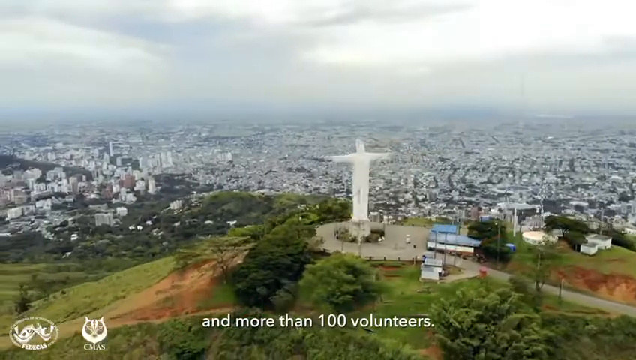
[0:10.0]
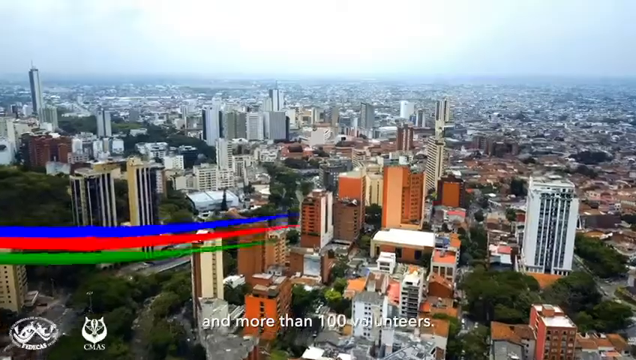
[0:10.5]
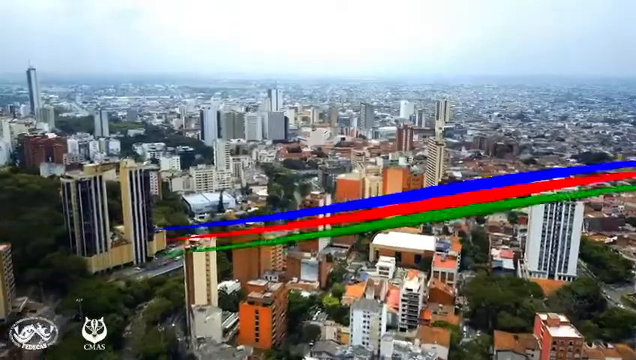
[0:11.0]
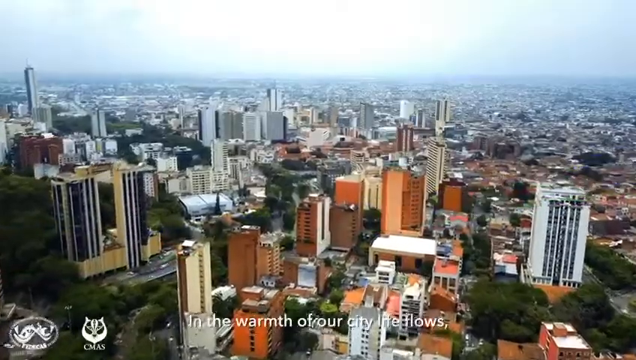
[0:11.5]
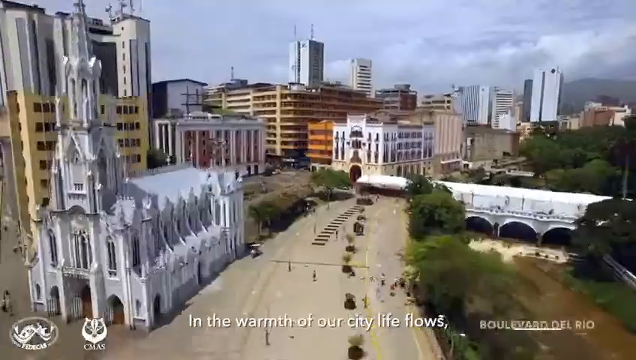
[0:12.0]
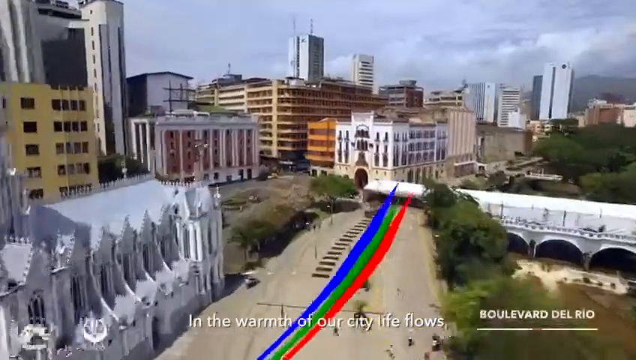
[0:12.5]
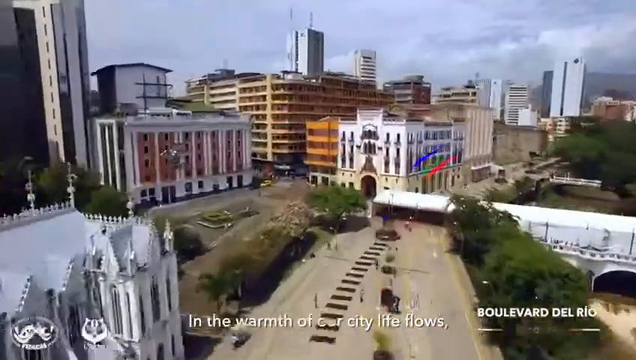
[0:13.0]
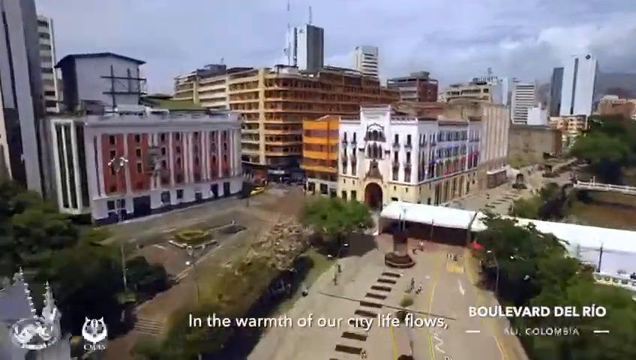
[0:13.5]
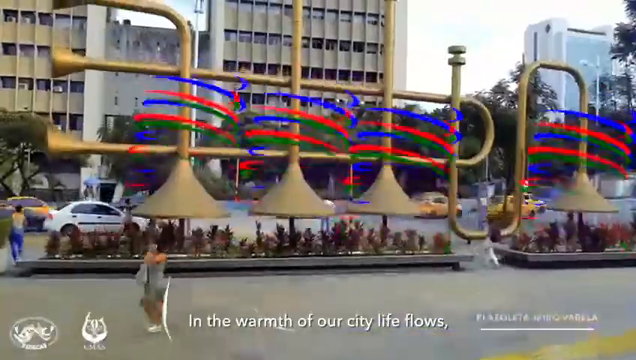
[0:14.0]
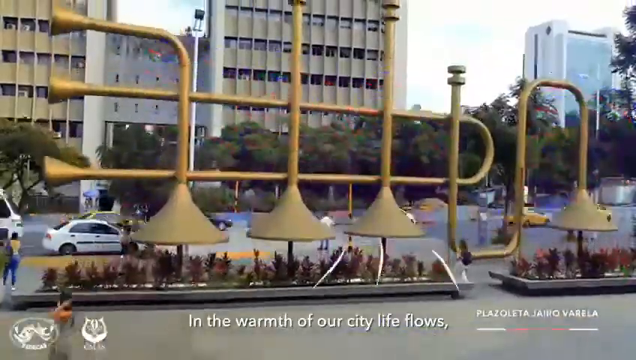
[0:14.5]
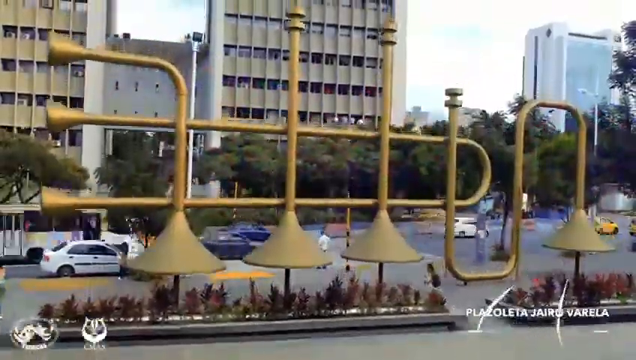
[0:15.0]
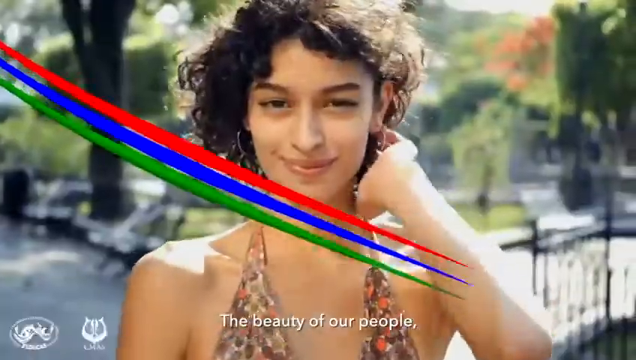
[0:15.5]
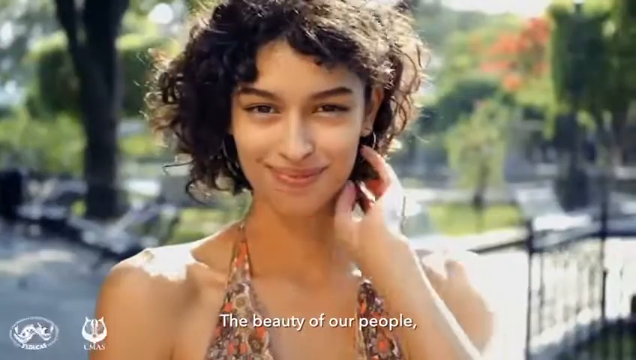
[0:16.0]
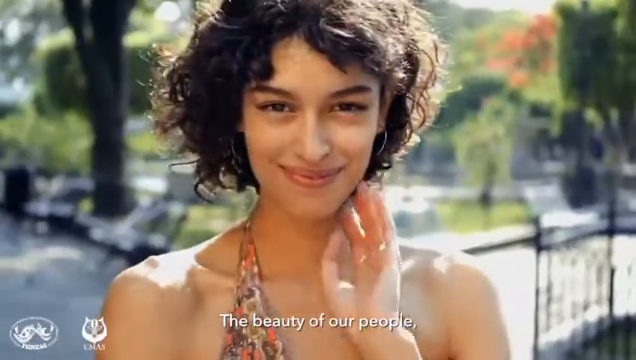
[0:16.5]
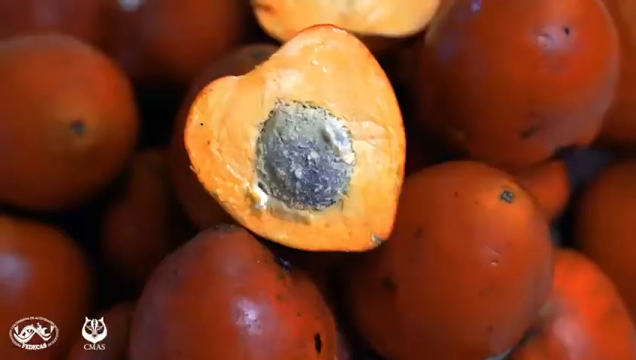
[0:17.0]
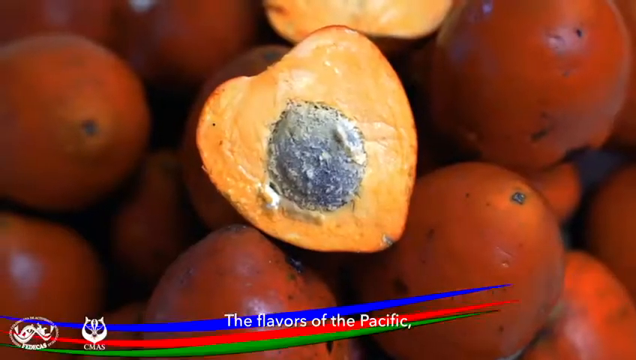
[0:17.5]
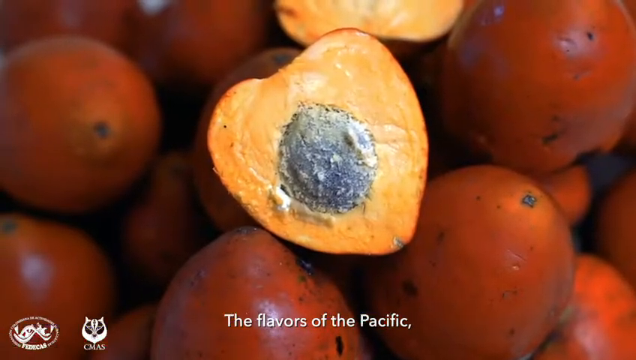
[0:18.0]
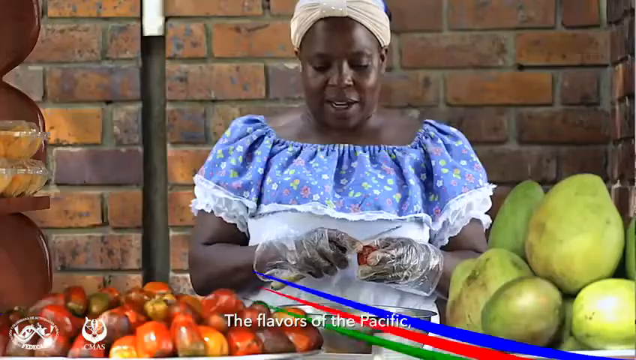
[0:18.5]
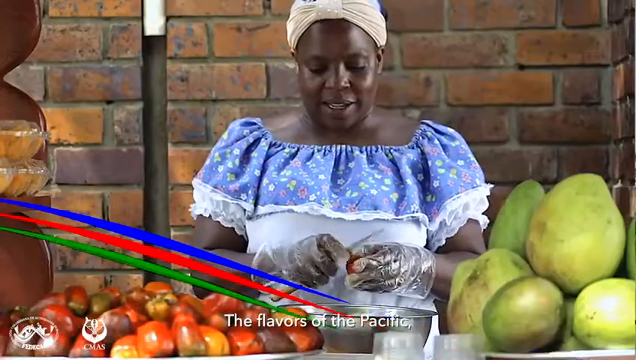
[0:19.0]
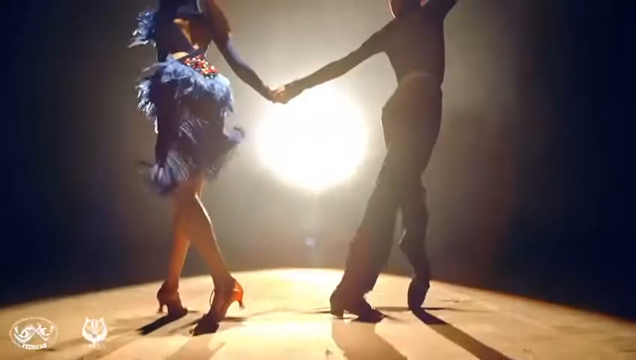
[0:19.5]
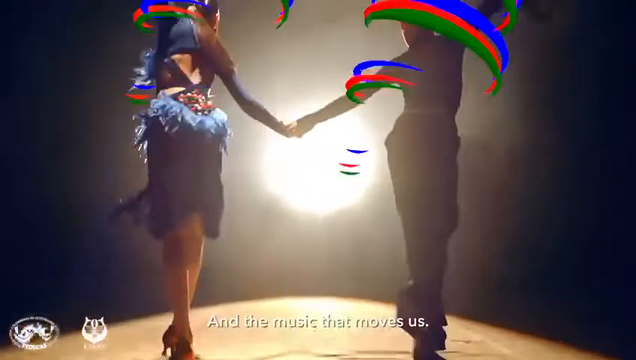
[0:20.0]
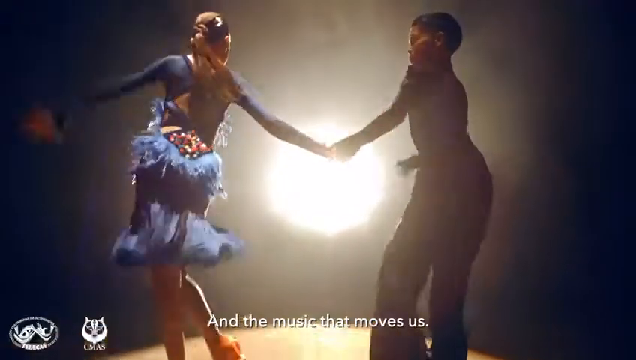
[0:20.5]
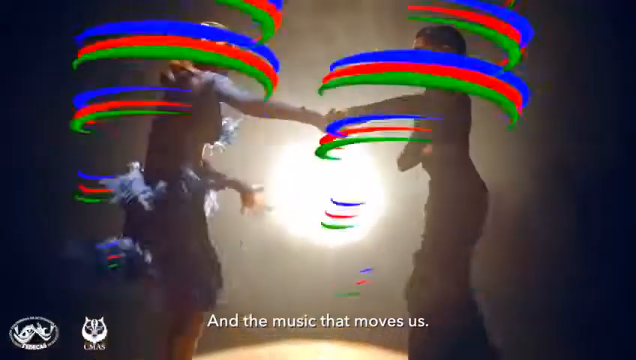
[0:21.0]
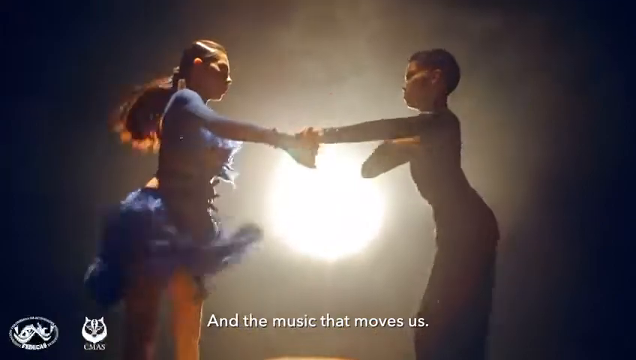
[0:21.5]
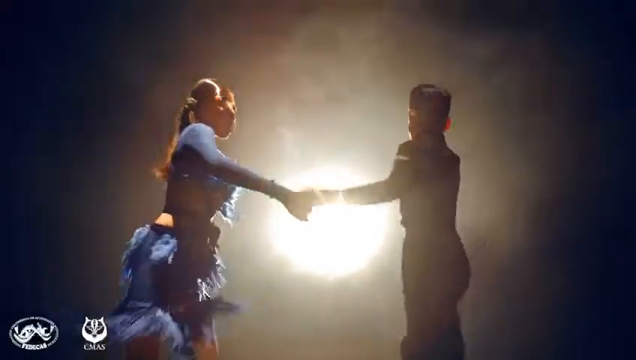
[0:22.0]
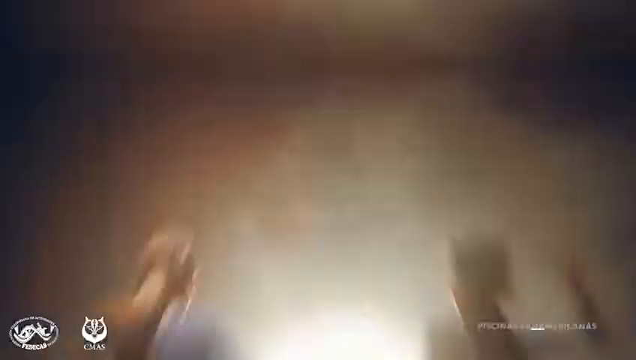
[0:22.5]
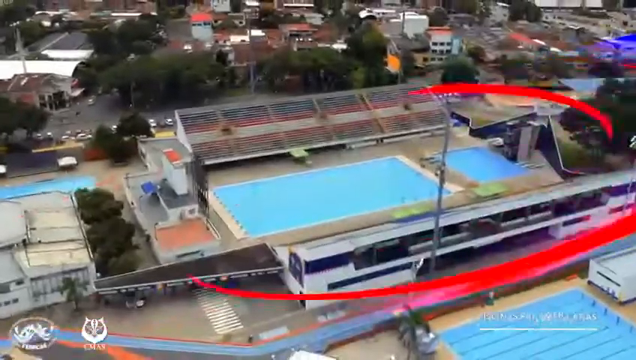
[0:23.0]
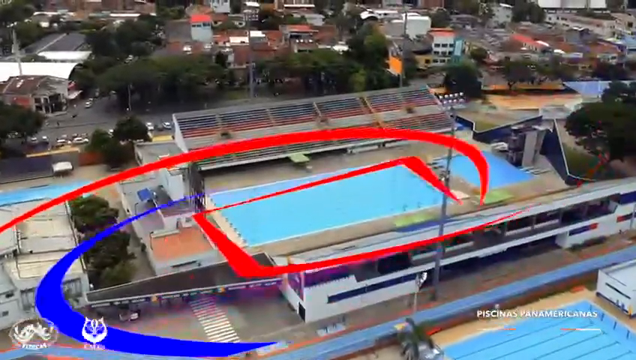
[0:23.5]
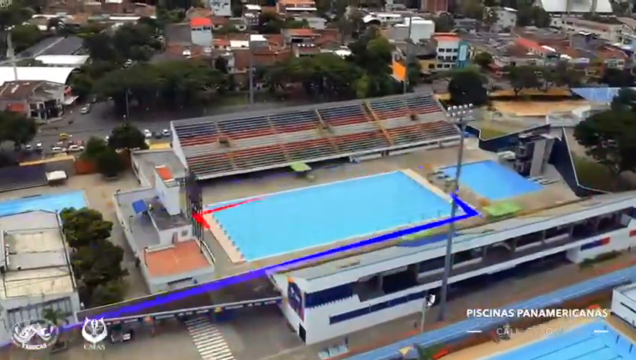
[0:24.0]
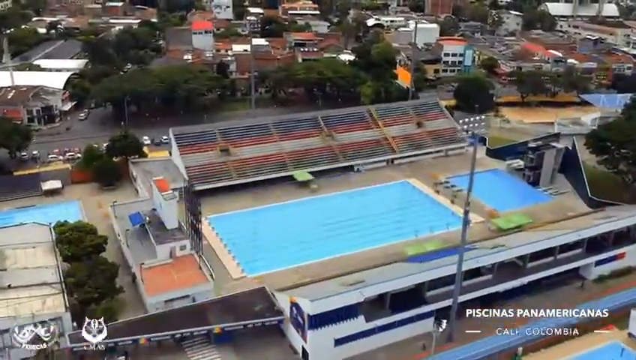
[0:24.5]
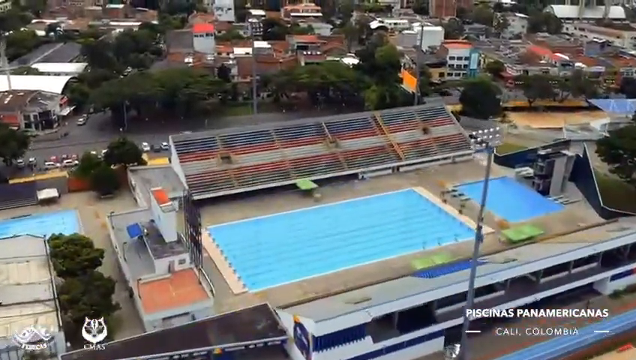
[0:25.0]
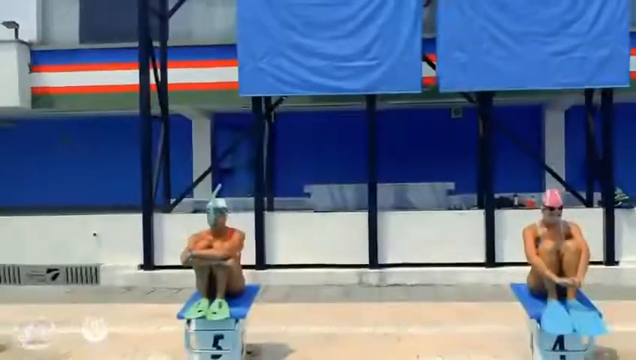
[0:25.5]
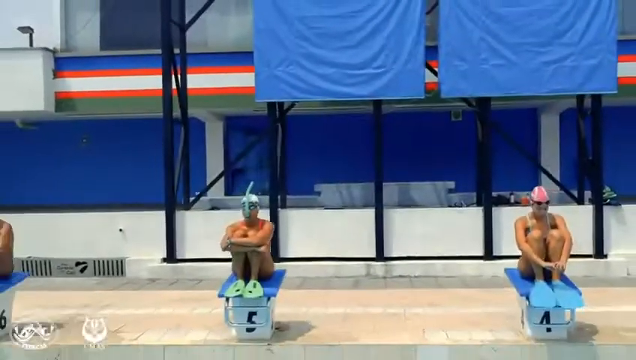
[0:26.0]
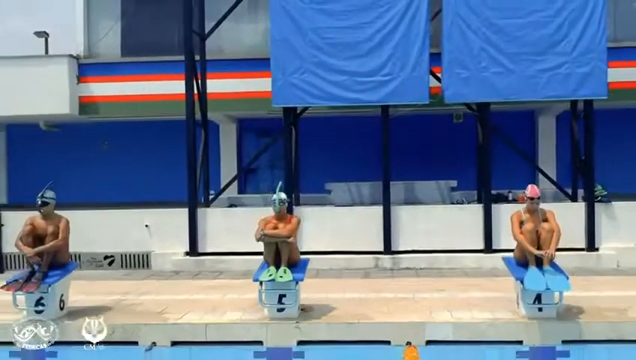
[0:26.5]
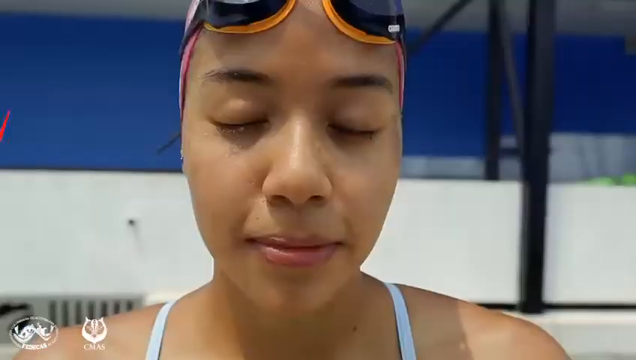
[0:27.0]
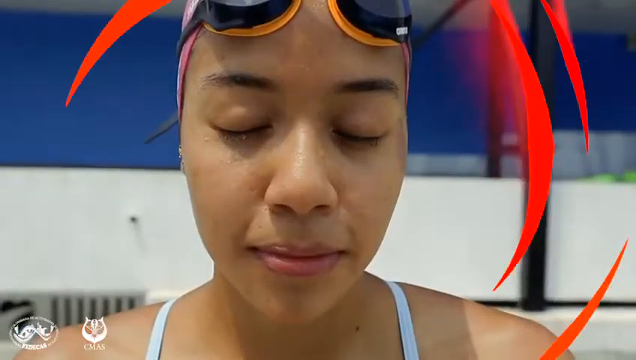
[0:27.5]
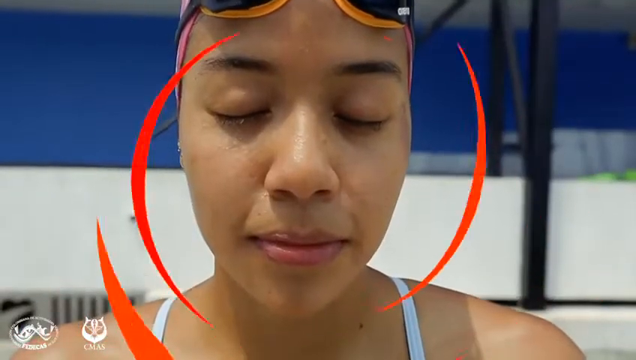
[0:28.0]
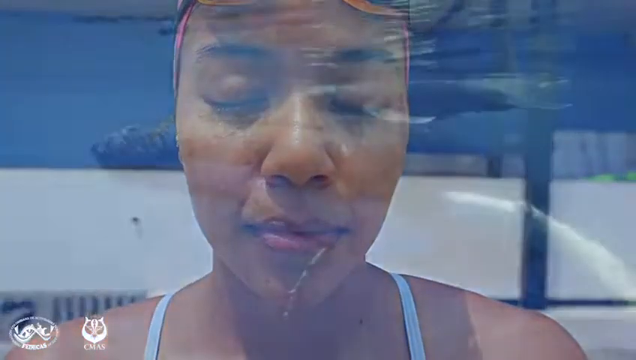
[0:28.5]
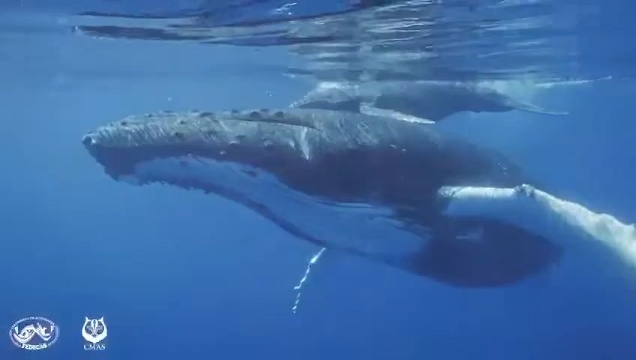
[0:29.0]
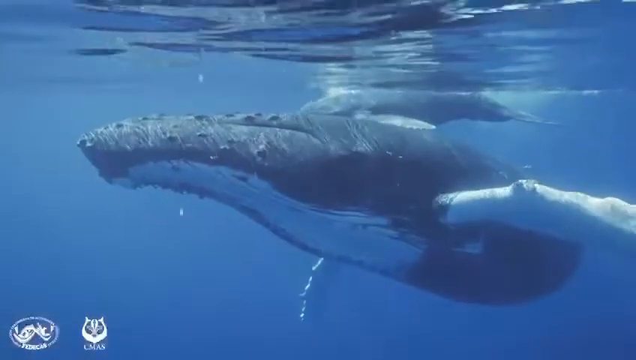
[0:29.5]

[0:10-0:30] Different people from around the city and its culture are shown, followed by a pool with some swimmers and then a whale. Subtitles include the words "flavors of the Pacific, music that moves us," and then "in Cali, Columbia" appears. More cultural images follow: a big statue with what looks like trumpets, a marketplace, and people dancing, apparently salsa. The camera then zooms in on a pool where swimmers are ready on the little podiums at each lane, apparently getting ready for a swim meet of some sort.